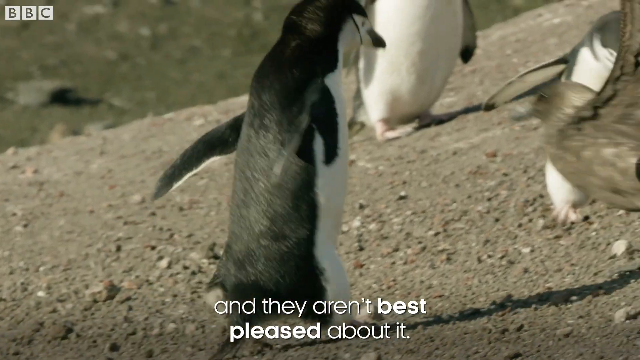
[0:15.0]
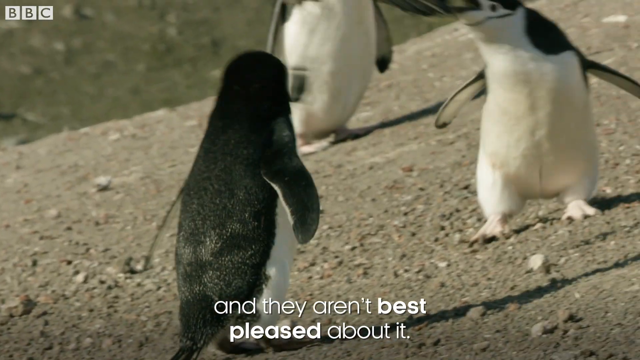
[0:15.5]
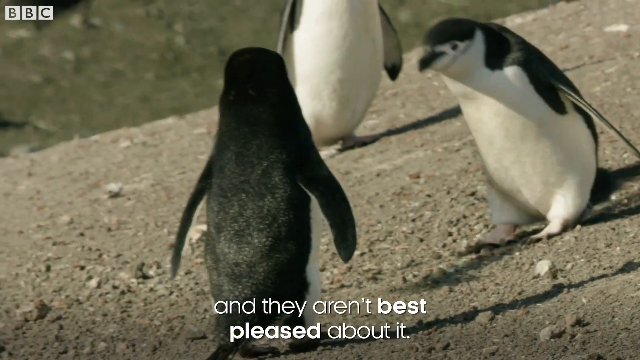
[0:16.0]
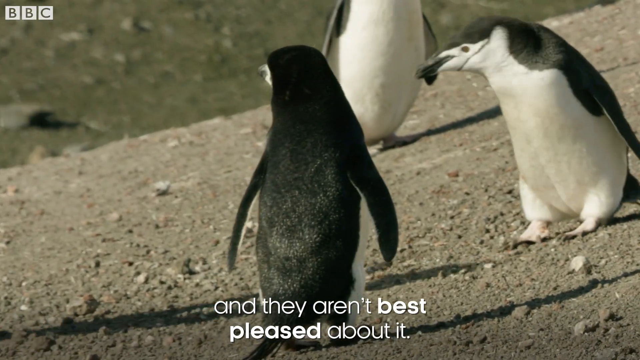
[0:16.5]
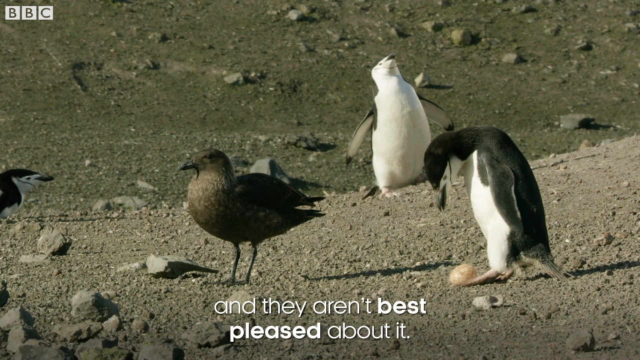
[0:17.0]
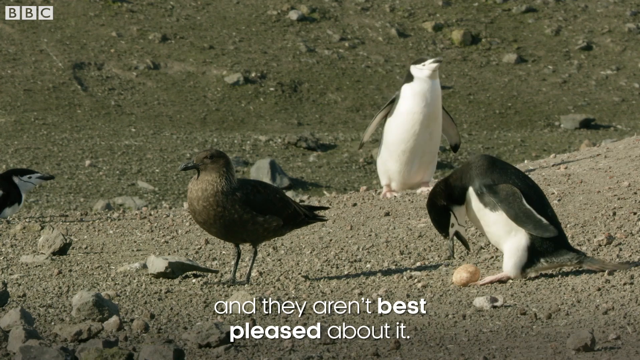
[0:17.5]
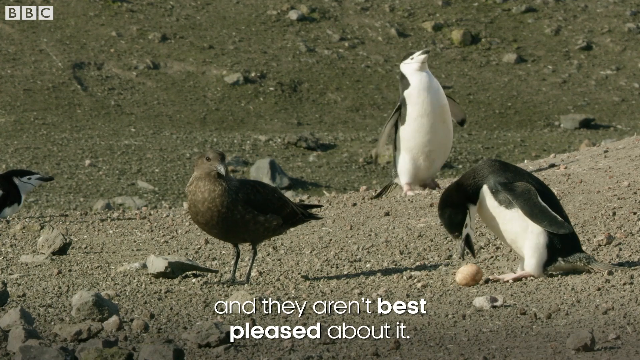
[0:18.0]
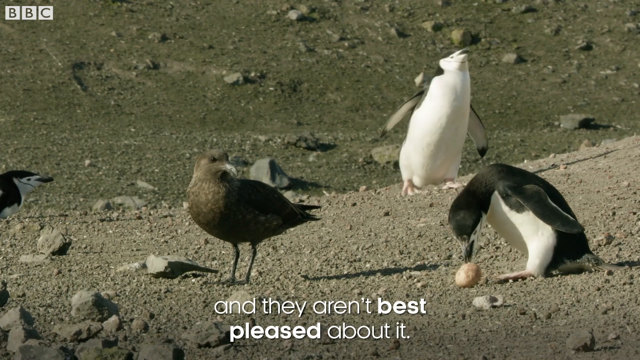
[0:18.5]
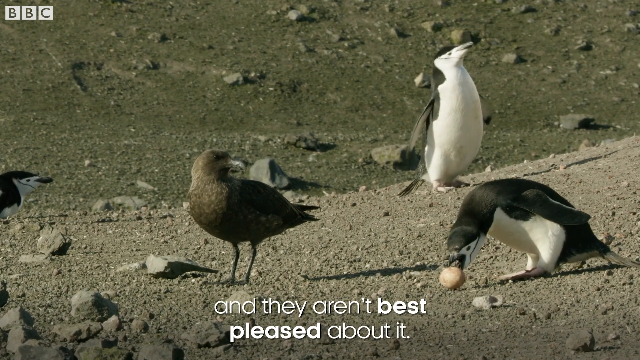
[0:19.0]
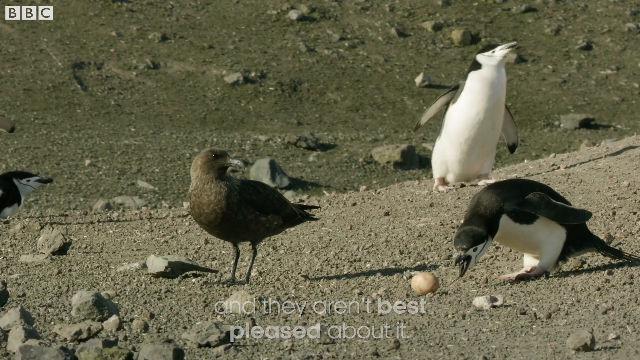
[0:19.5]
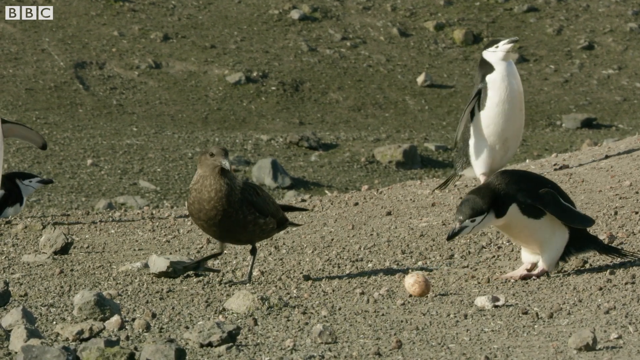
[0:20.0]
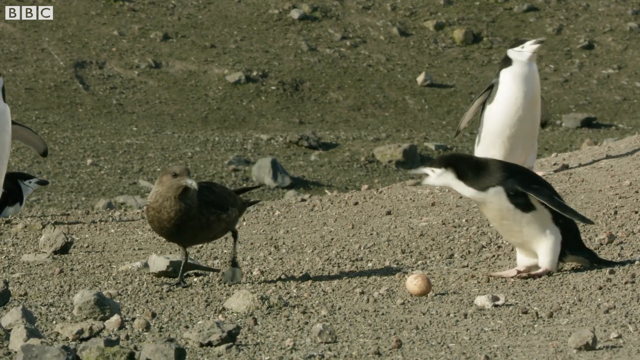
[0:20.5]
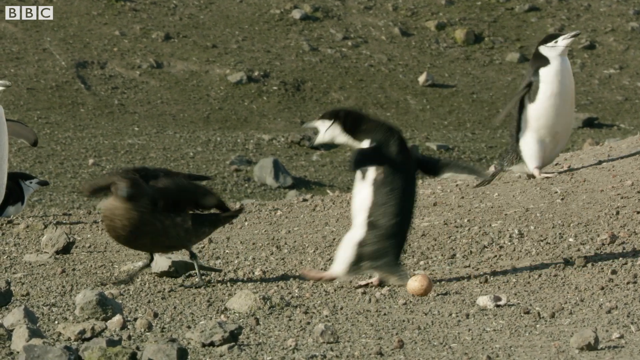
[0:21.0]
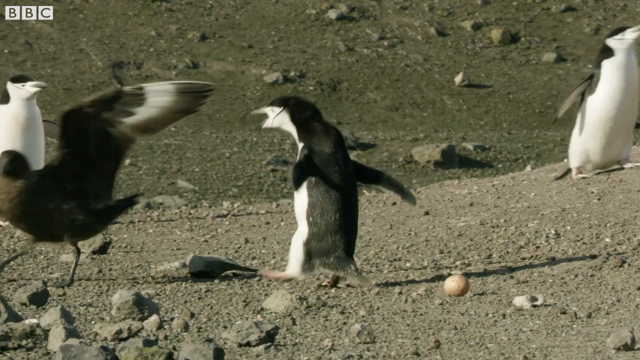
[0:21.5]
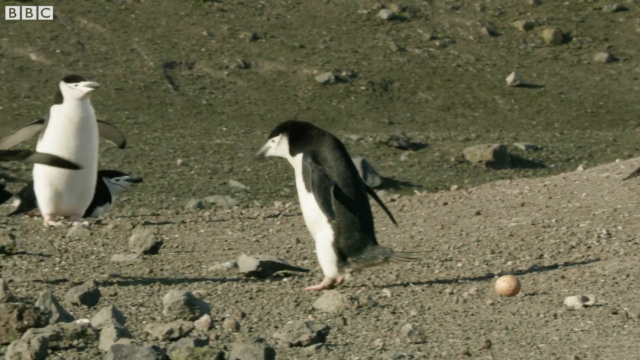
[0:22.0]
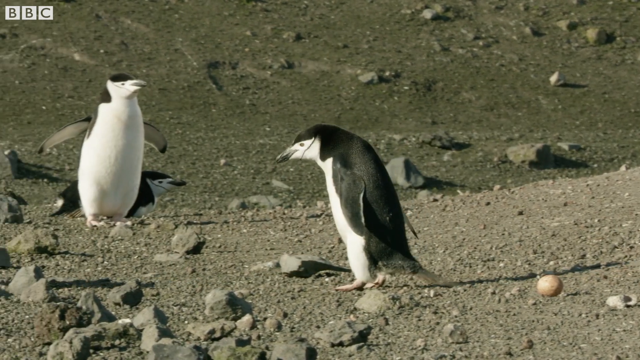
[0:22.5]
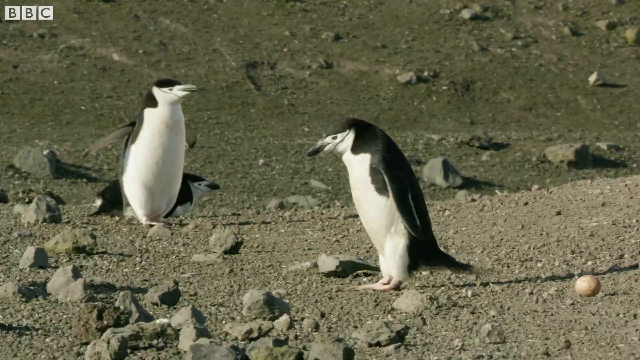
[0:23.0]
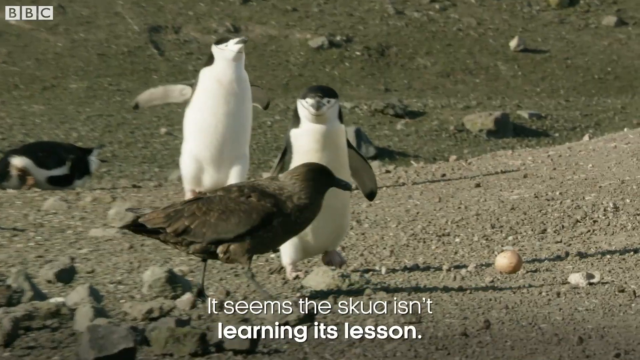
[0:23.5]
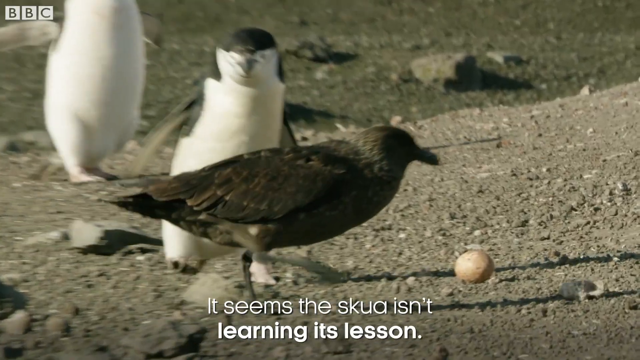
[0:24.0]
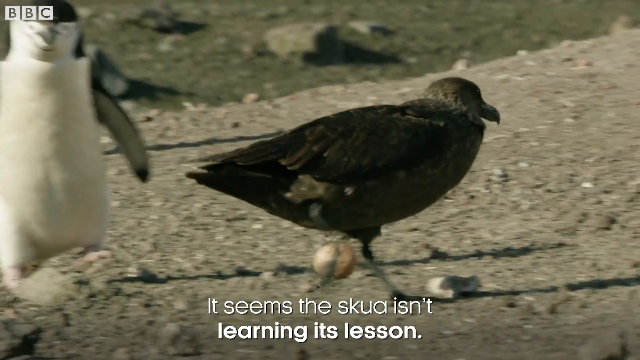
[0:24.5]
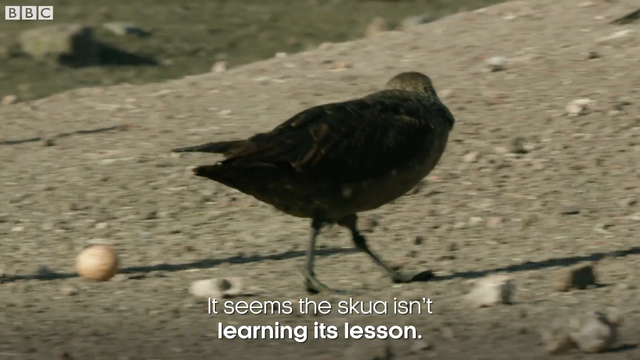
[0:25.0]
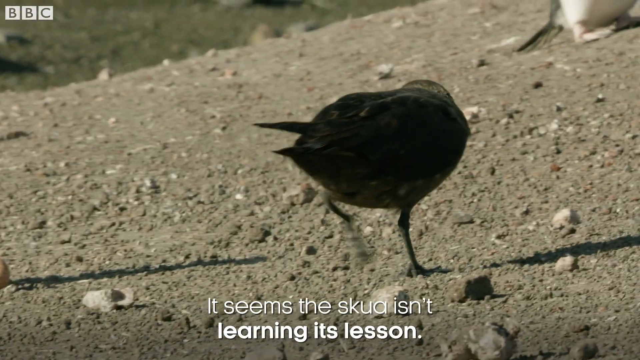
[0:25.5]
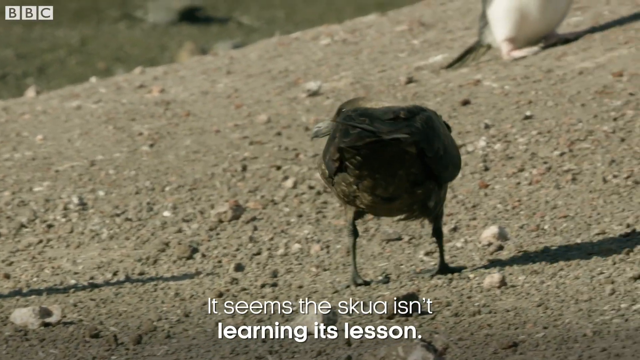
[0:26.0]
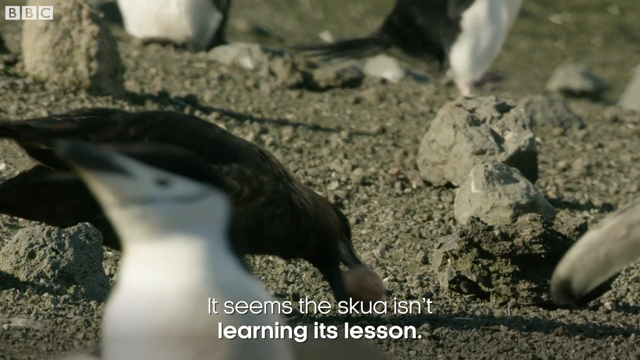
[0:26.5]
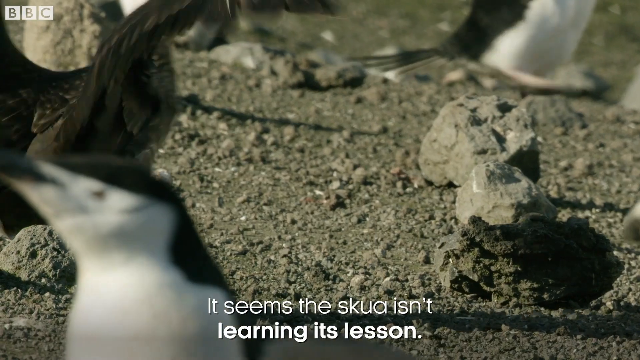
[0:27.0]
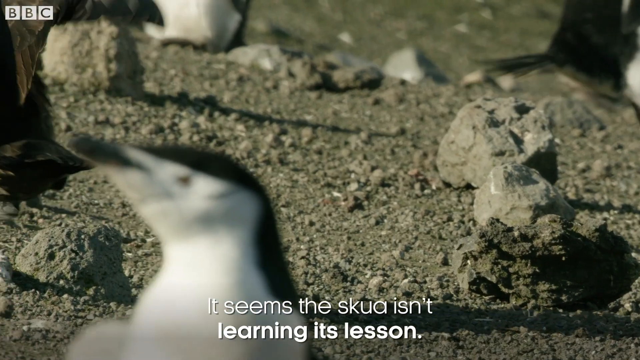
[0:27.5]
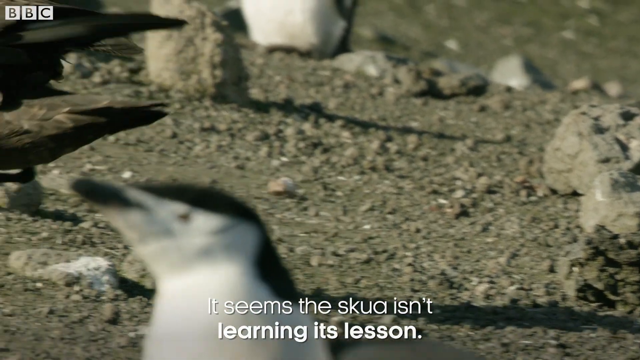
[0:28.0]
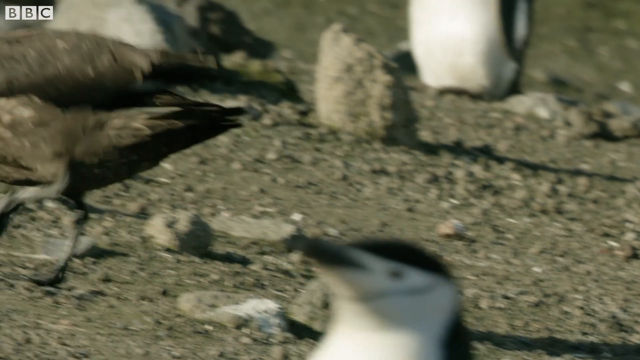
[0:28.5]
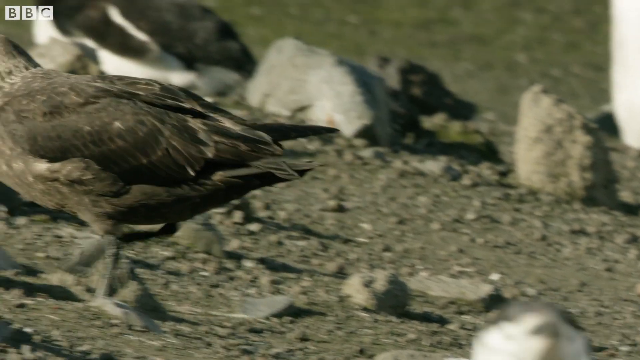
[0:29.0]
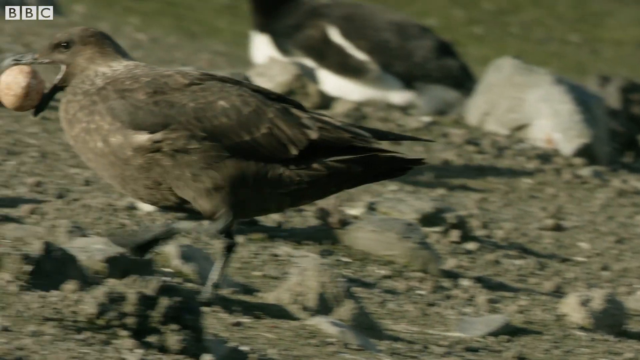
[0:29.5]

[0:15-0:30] On a coast with grayish rocky sand there is a penguin egg. Three penguins have noticed a bird trying to steal their egg, and they all start to go toward the bird to shoo it away, but the bird is persistent. It keeps trying and succeeds in lifting the egg, and when it starts to walk away, the penguins chase after it until it drops the egg. They continue to chase it, snapping at it as it flies by the egg and jumping at it to keep it away from the egg, while the bird keeps persisting.